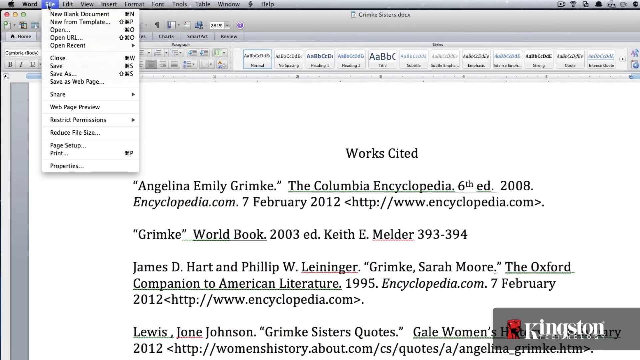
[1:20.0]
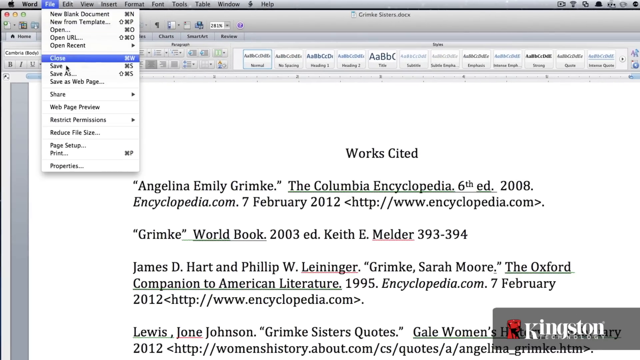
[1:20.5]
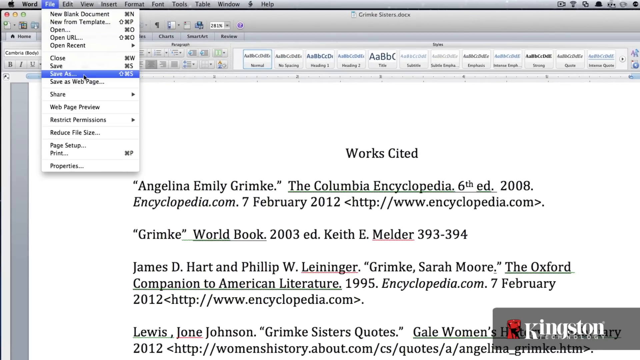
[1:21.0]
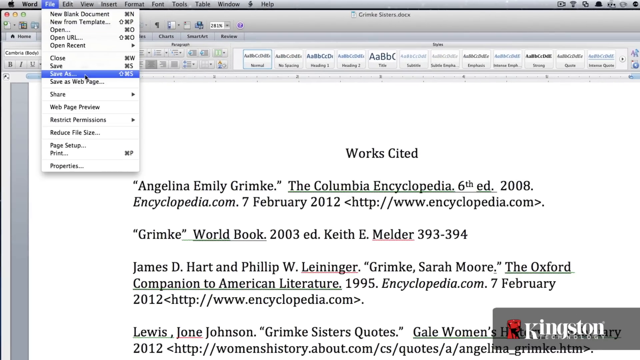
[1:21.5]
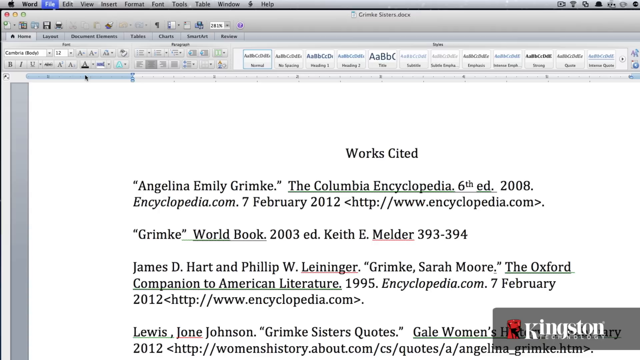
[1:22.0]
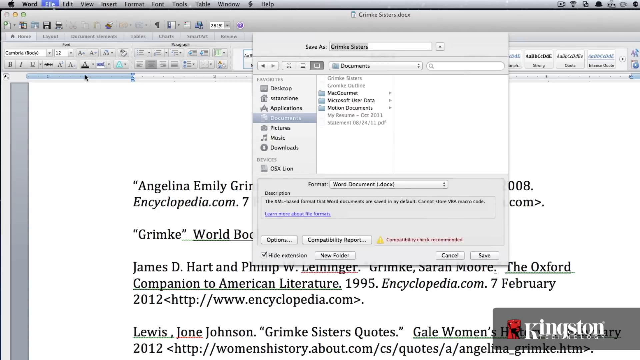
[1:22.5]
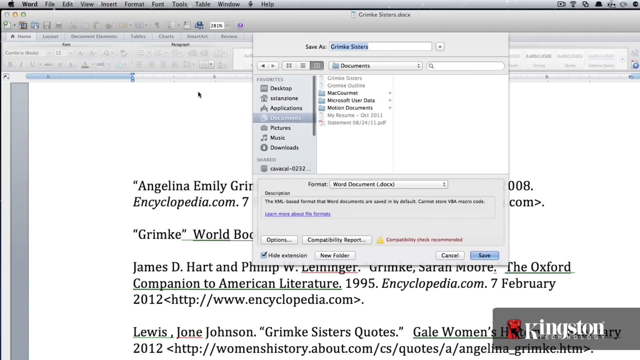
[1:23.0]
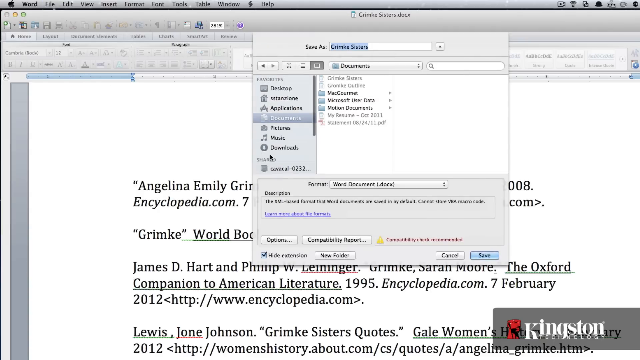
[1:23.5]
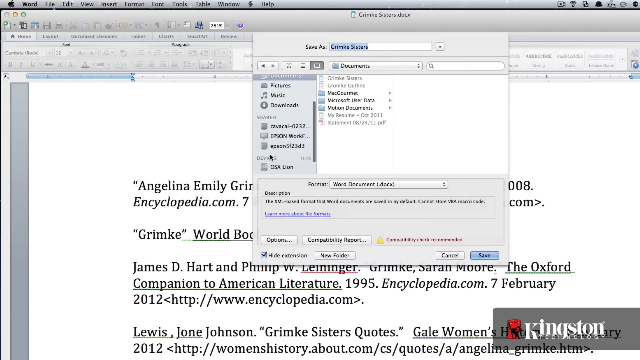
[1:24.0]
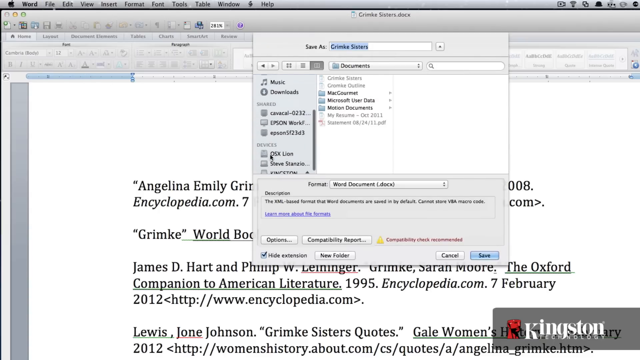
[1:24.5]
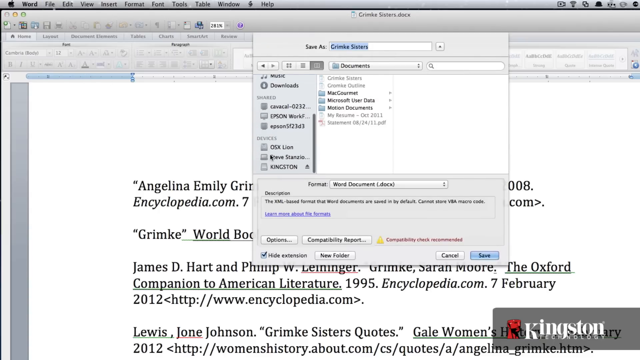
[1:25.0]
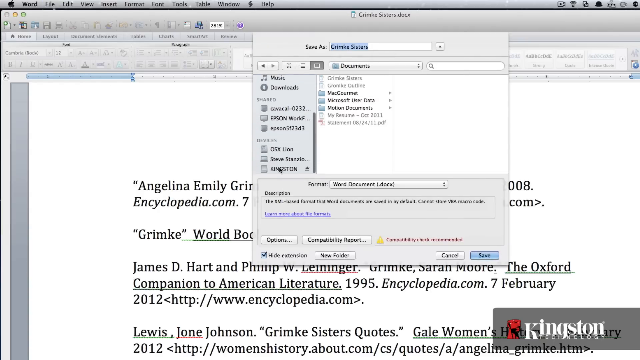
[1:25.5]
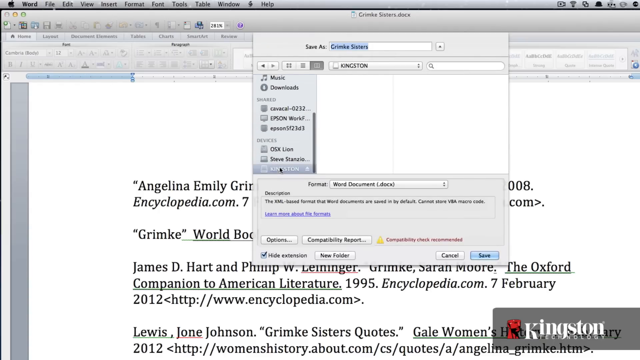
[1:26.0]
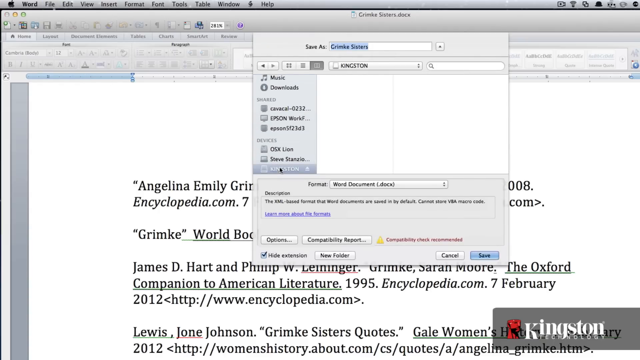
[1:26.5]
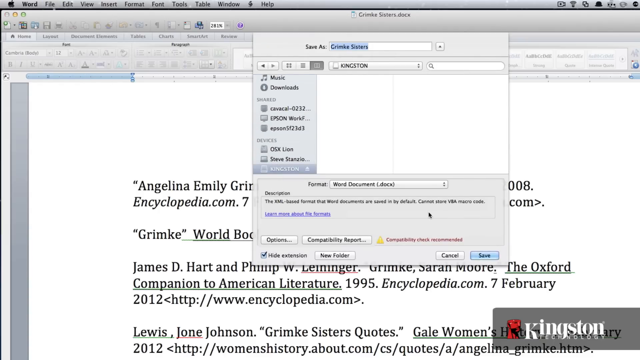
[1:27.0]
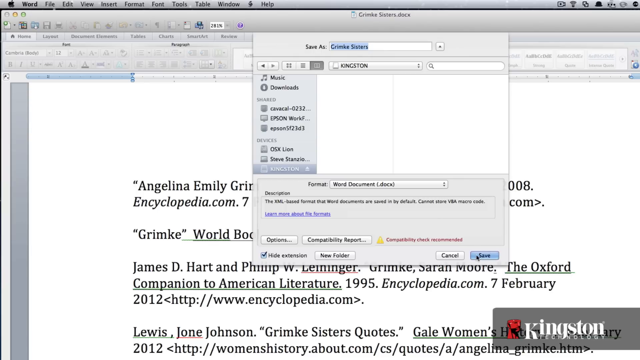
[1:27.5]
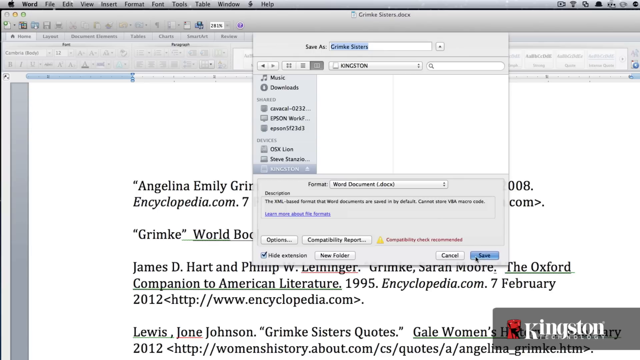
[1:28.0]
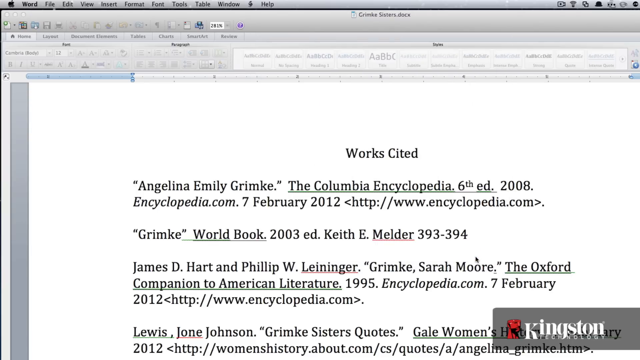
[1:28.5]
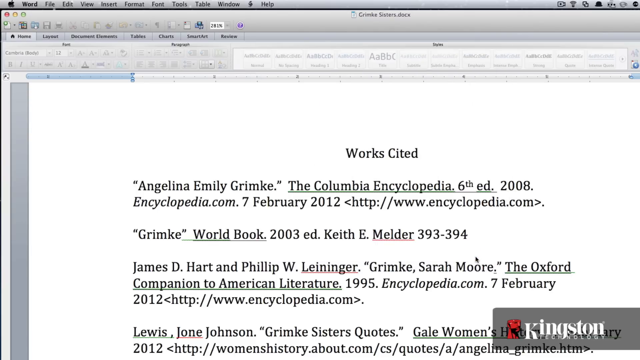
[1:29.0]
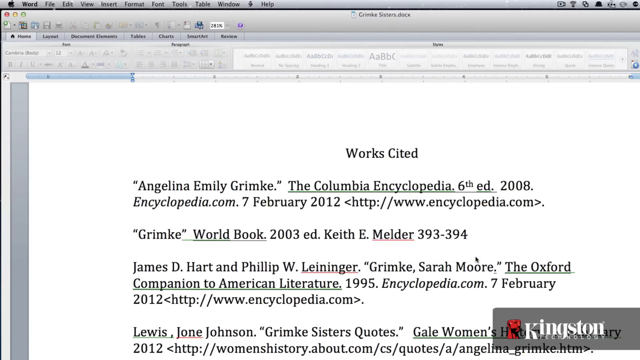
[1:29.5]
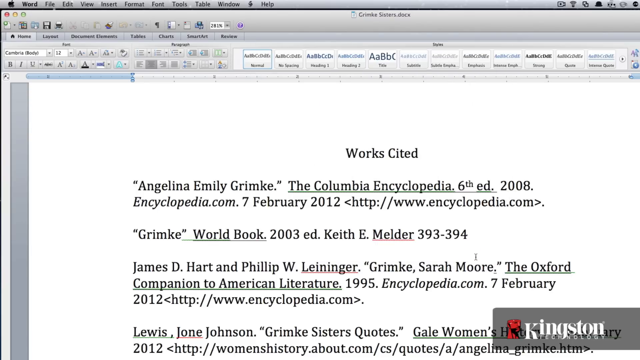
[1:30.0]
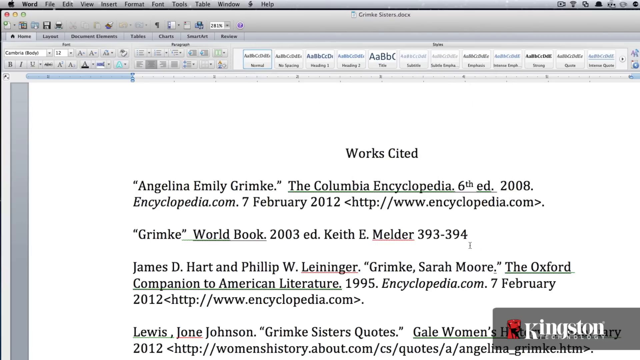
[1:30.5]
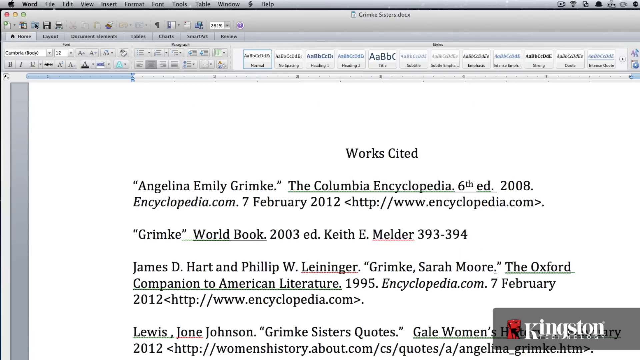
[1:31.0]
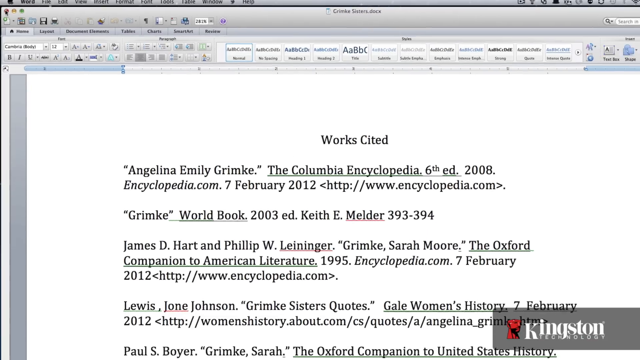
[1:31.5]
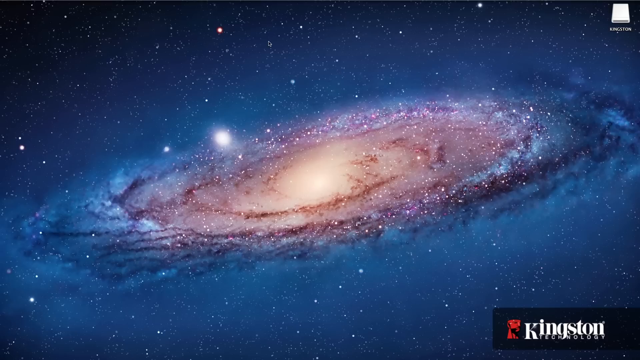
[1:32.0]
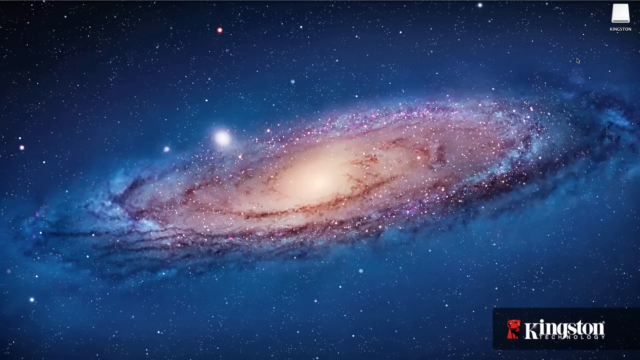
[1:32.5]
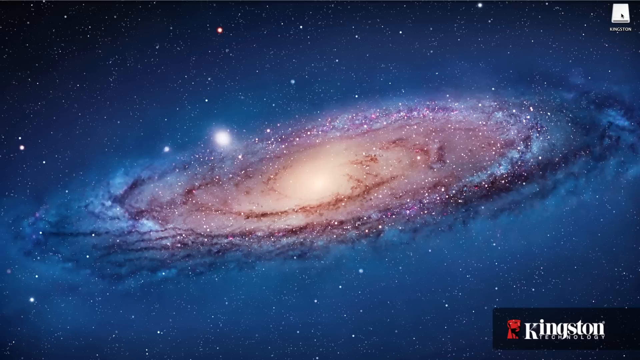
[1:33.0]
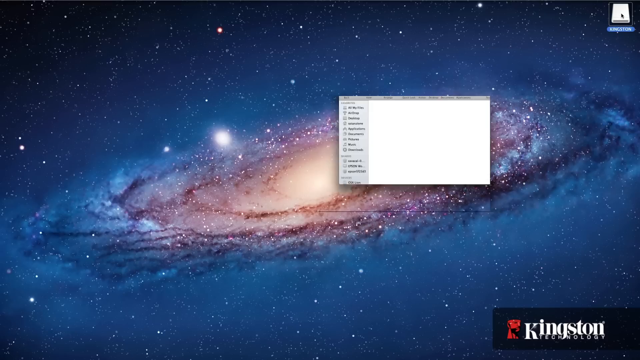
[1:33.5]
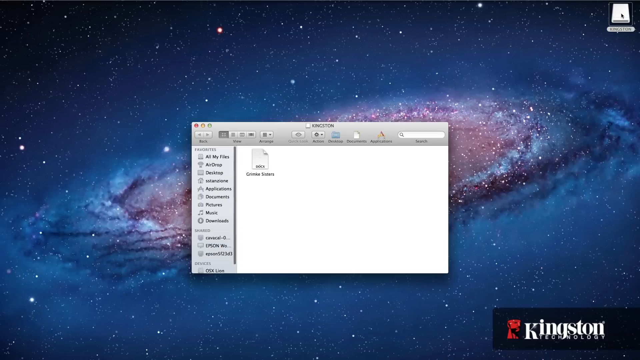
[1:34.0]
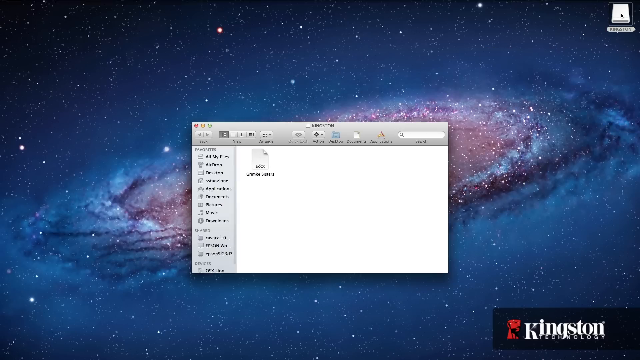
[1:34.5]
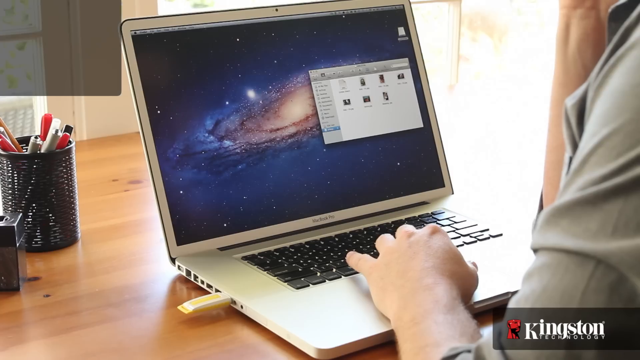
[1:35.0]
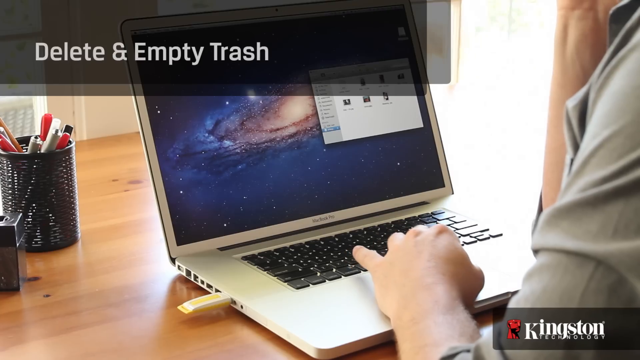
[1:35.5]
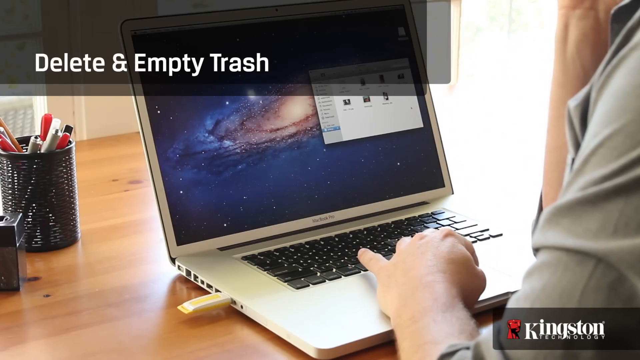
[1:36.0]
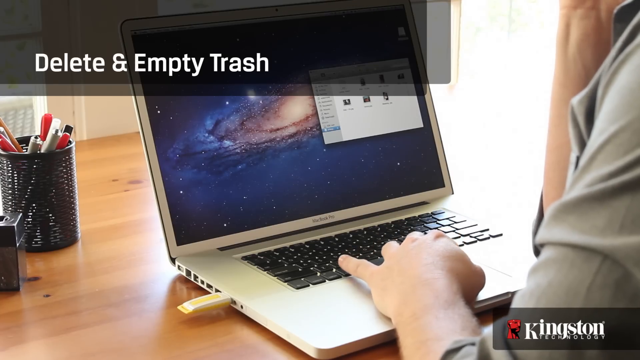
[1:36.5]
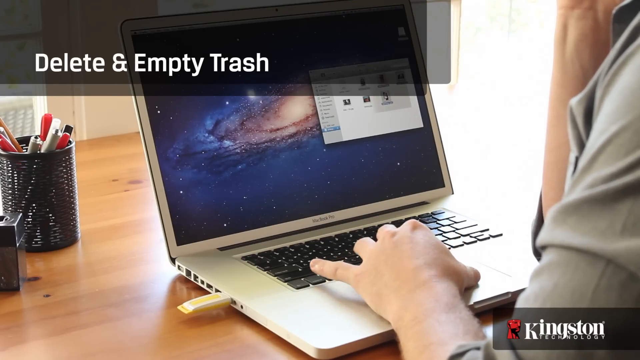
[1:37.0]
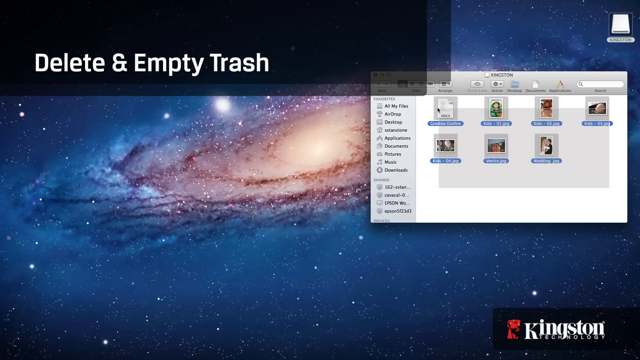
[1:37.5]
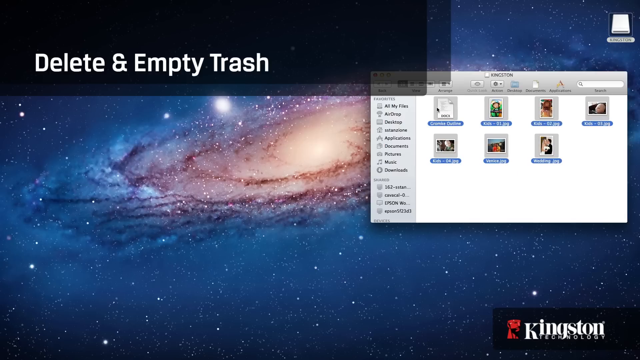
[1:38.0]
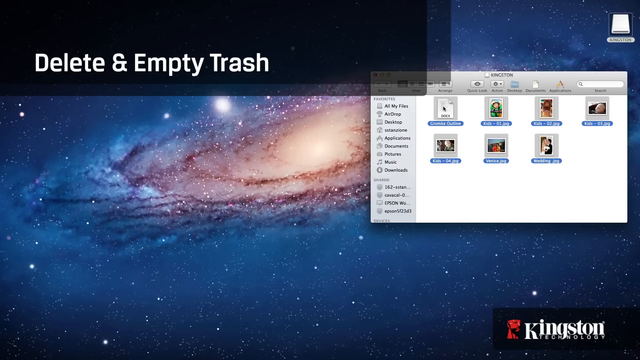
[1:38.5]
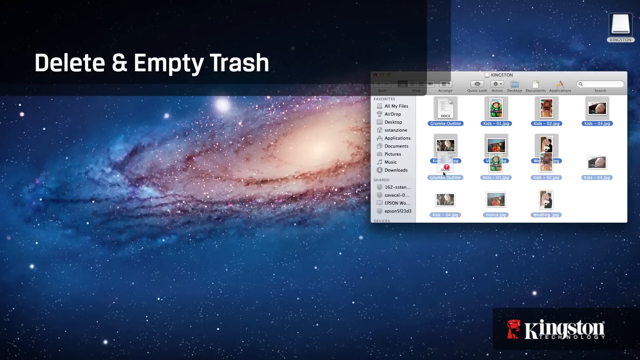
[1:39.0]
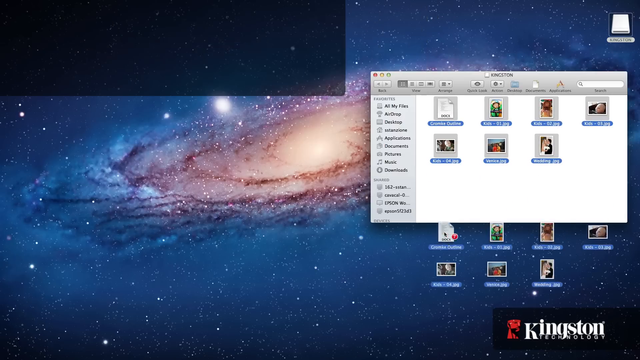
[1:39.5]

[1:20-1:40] A Works Cited page is open, and the cursor clicks on a drop-down menu listing "New Blank Document," "New from Template," "Open," "Open URL," "Open Recent," "Close," "Save," "Save As," "Save As Webpage," "Share," "Webpage Preview," "Restrict," "Permissions," "Reduce File Size," "Page Setup," "Print" and "Properties." The cursor goes down to "Save As," which lights up blue, and the document is saved. A pop-up appears reading "Save As" and "Crime Sisters." Using the cursor on the right side of the drop-down, they go down to "Epson Workplace," click, continue further down, and drop down to "Kingston," the name of the USB they are using. The screen then goes to "Delete" and "Empty Trash," and items are moved down to the trash can.